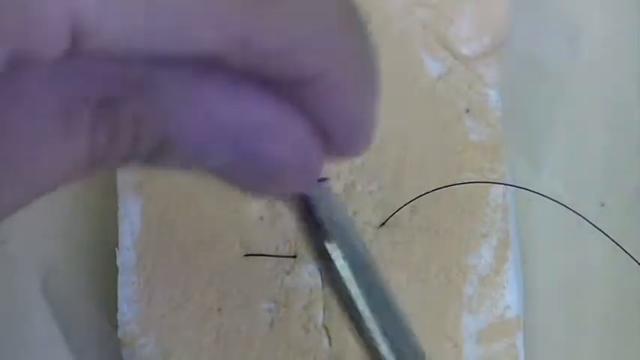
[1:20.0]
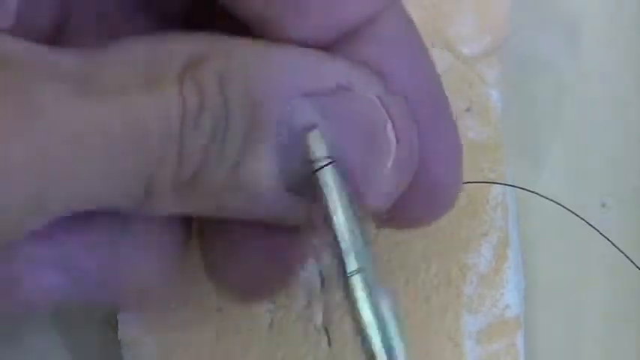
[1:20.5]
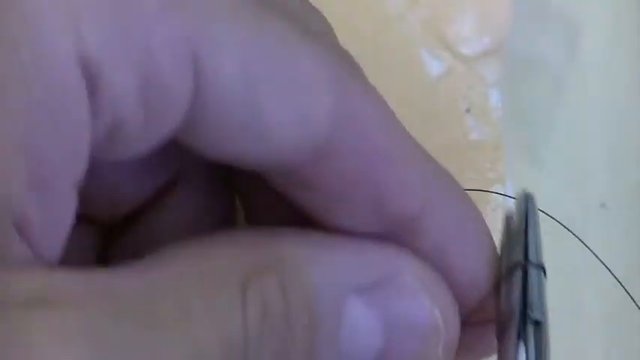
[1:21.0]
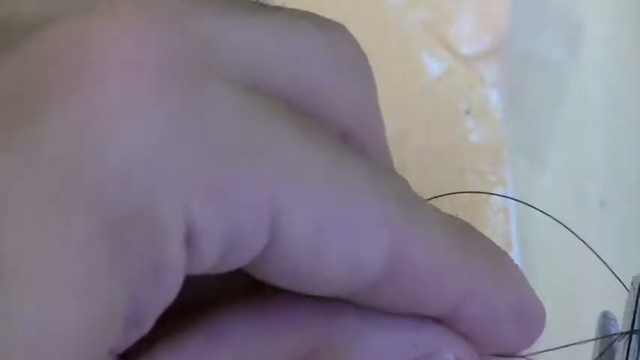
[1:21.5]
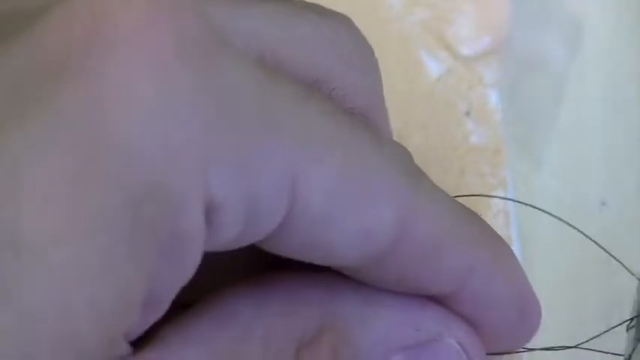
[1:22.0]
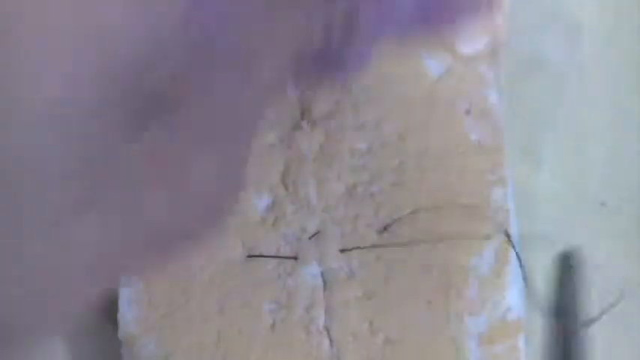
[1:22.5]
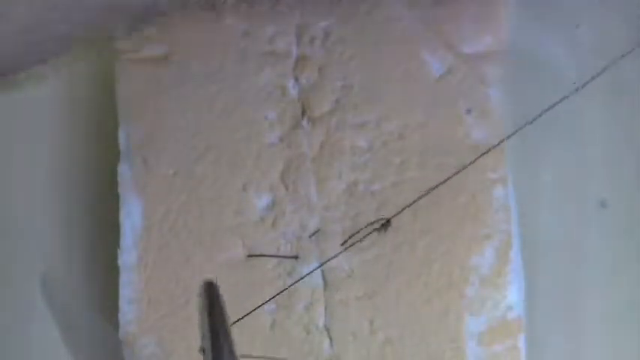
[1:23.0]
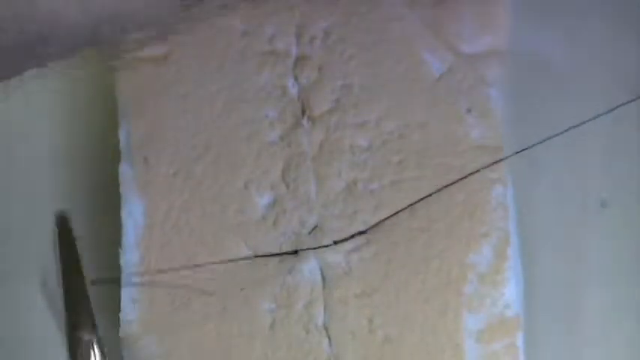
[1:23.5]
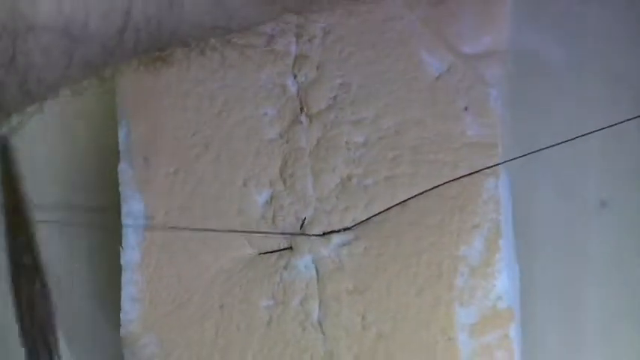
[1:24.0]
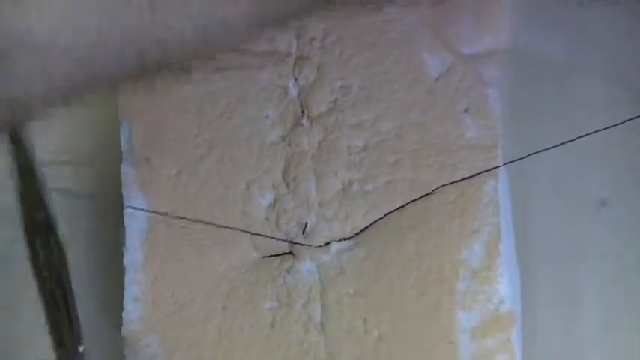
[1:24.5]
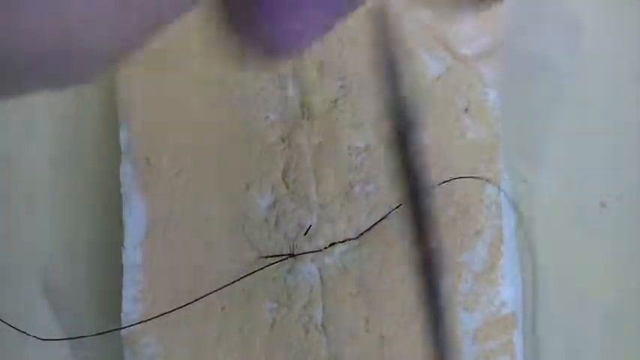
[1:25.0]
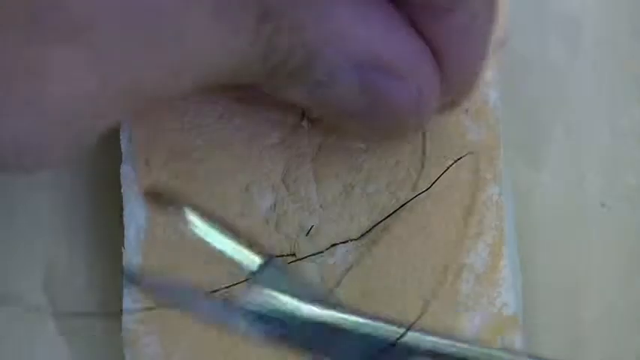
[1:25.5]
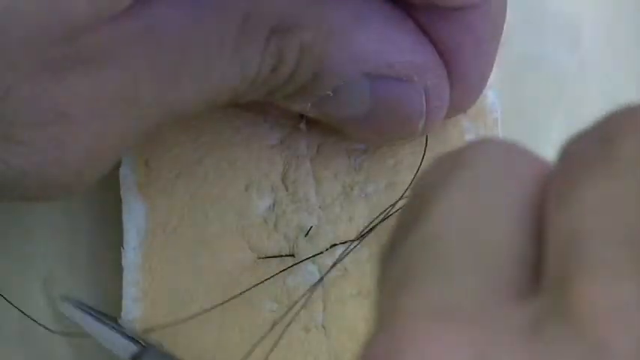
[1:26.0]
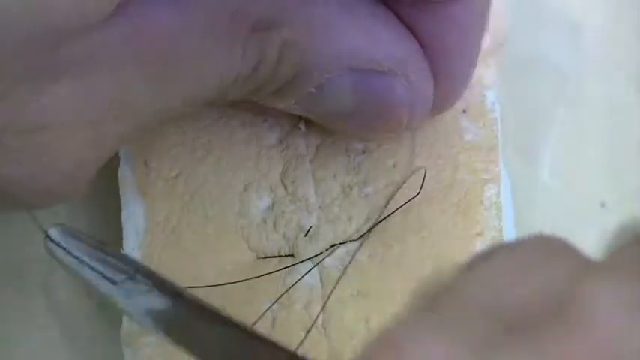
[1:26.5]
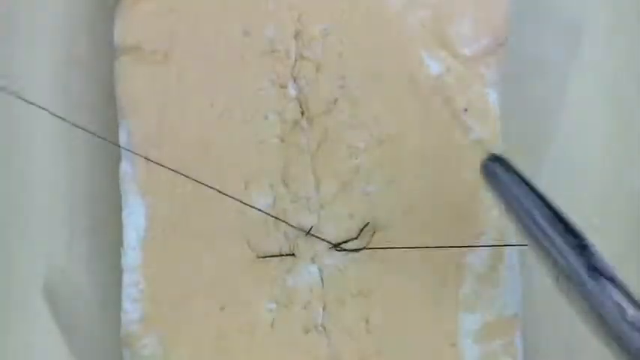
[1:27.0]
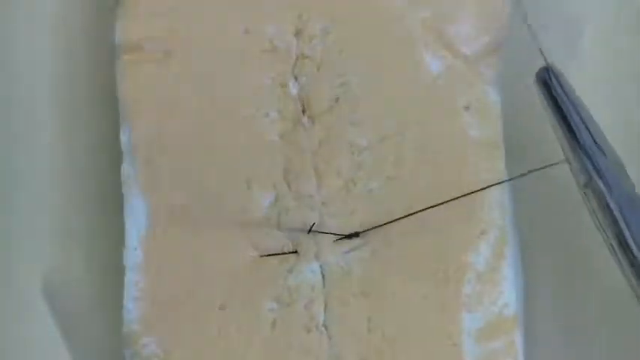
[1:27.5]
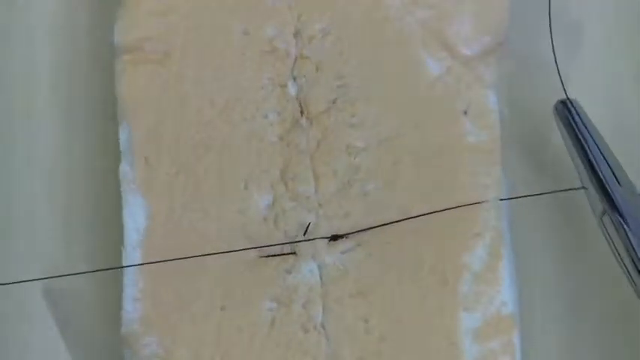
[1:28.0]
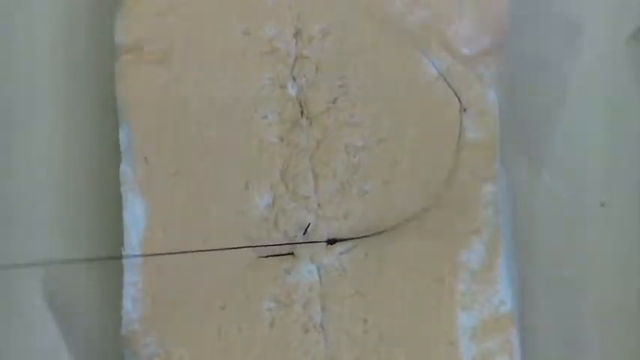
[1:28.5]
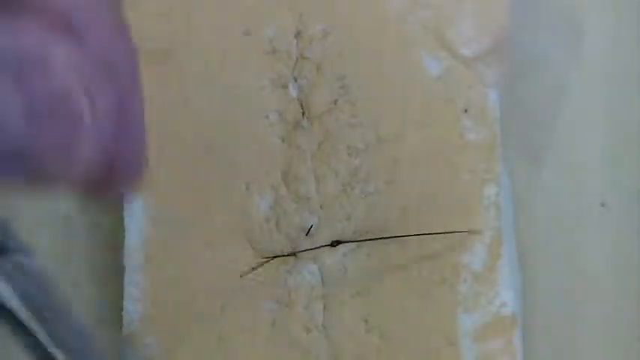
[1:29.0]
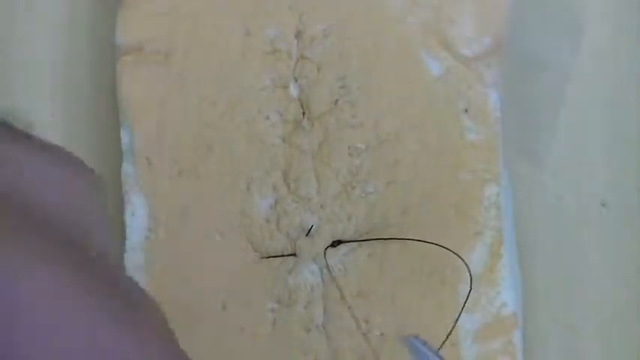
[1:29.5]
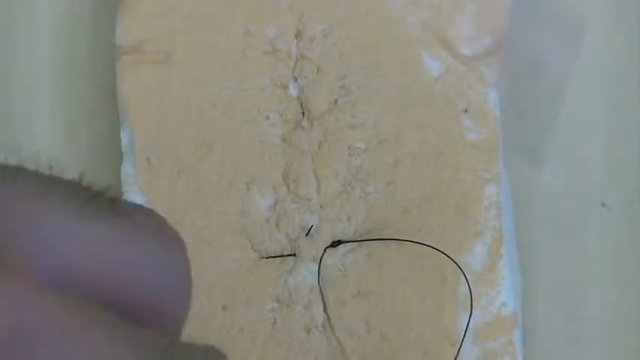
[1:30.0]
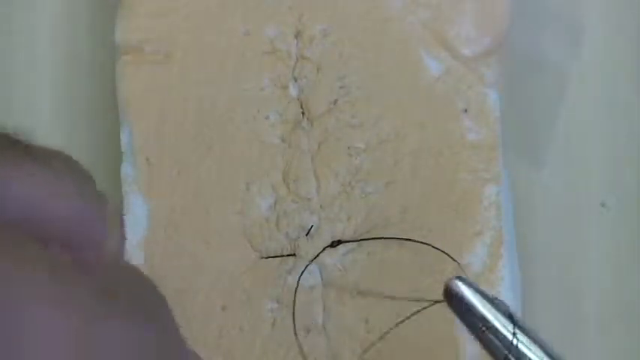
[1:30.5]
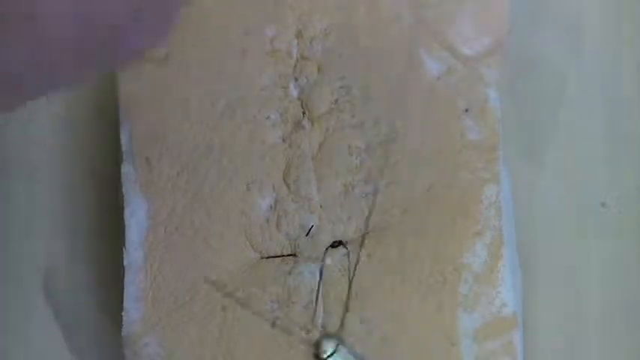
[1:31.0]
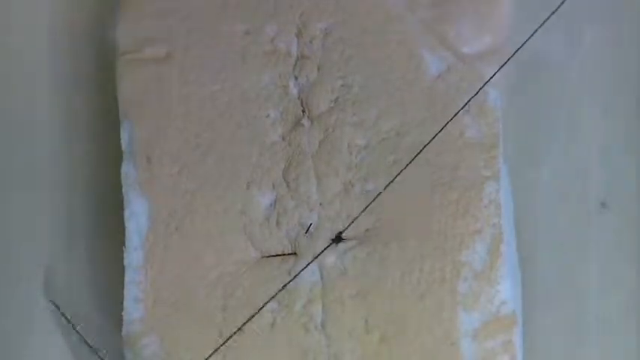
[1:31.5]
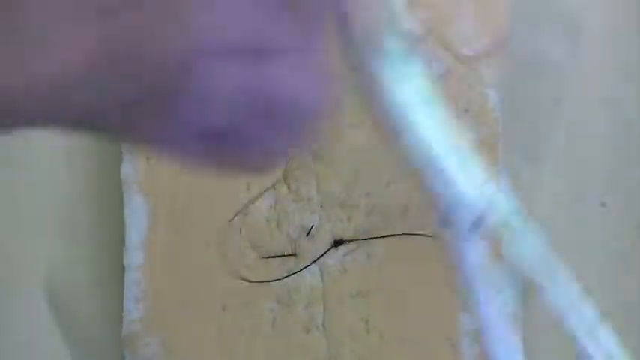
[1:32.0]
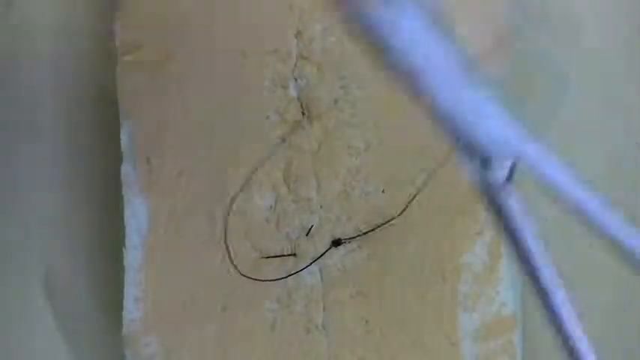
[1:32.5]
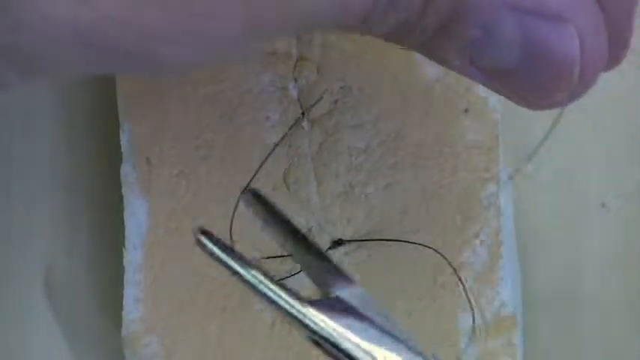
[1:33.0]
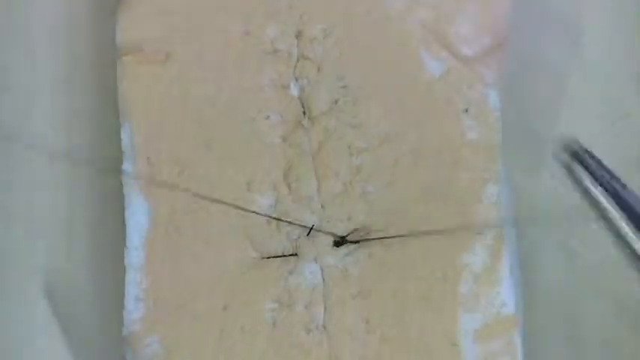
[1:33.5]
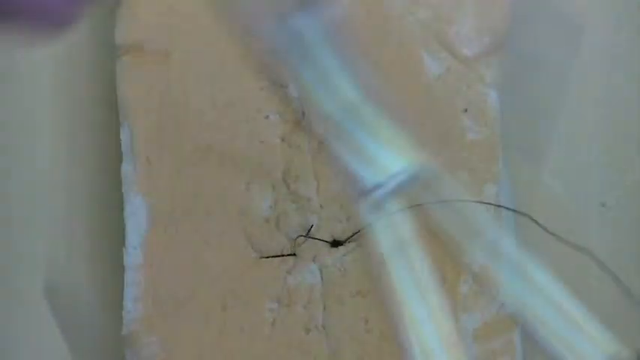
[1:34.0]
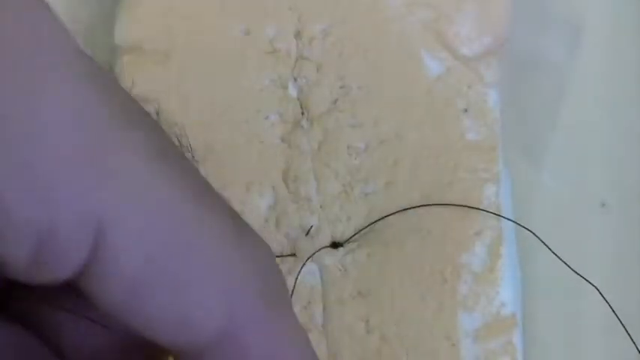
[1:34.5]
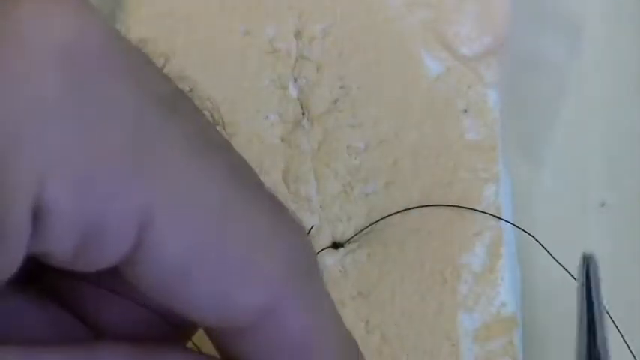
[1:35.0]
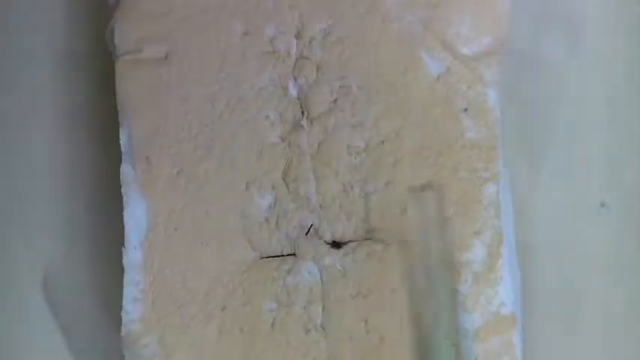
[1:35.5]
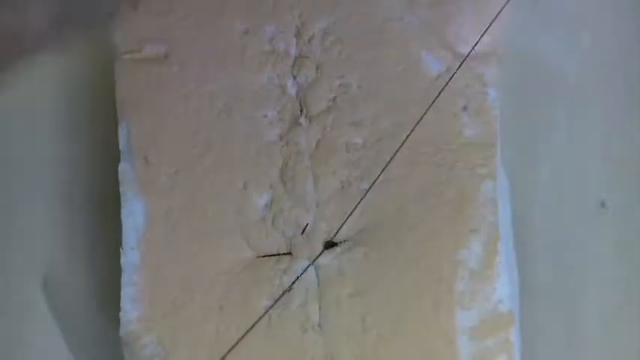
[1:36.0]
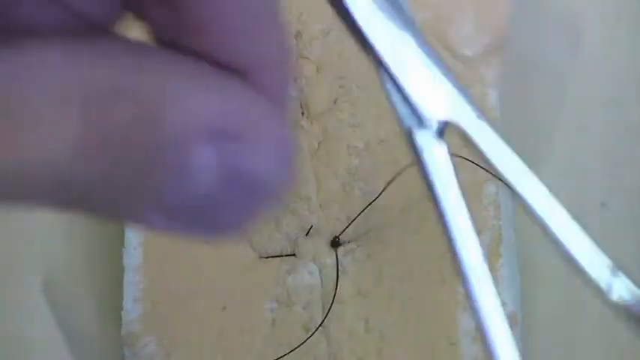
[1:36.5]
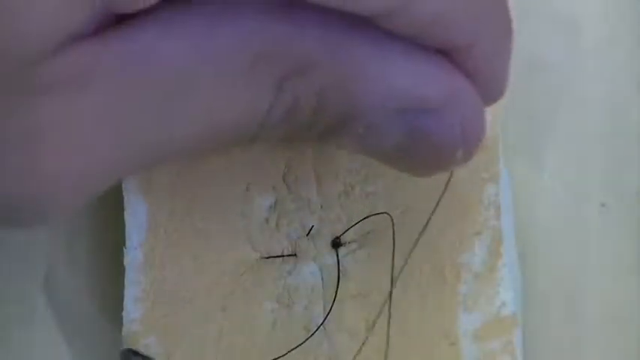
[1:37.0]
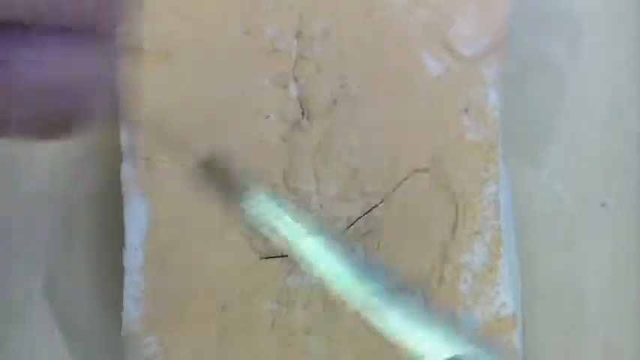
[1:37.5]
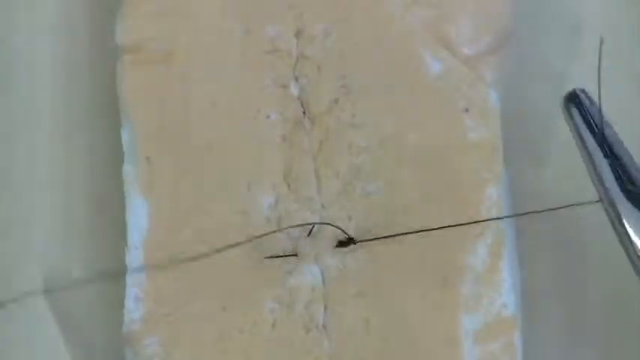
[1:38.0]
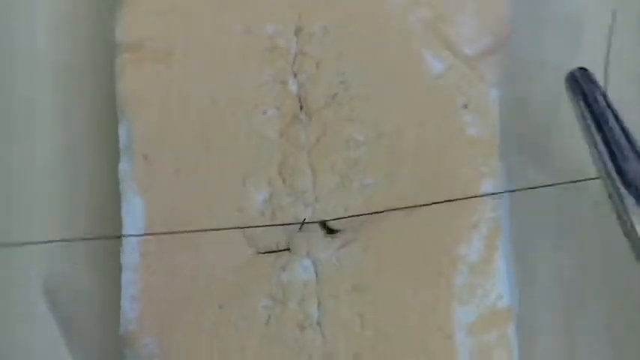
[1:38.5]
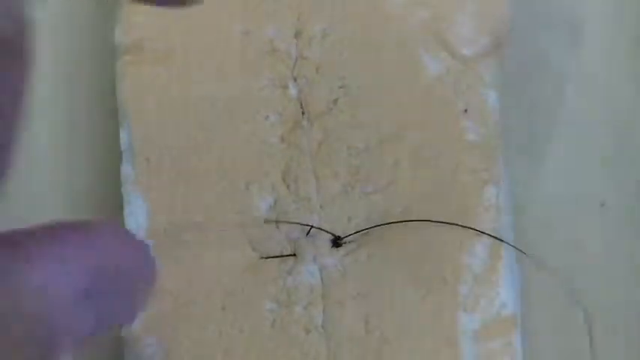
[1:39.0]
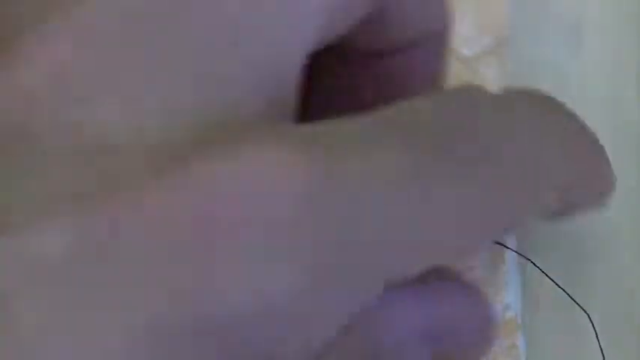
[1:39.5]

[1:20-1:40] The man winds the thread around the forceps, then opens them and pulls the other end to interlock and tie the thread so it does not come loose, apparently using the forceps and, this time, his hand. He ties it multiple times. He works with two pairs of forceps and the thread.